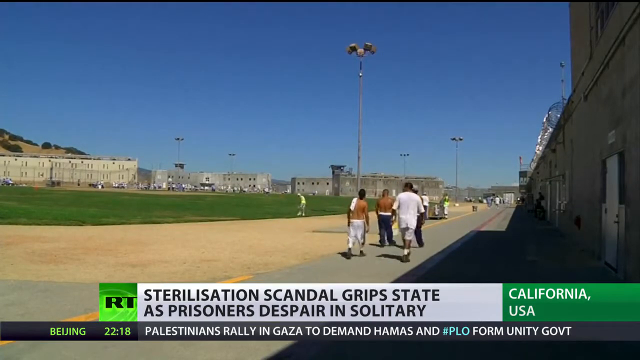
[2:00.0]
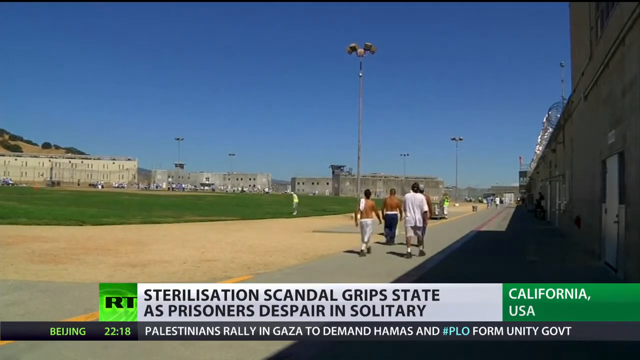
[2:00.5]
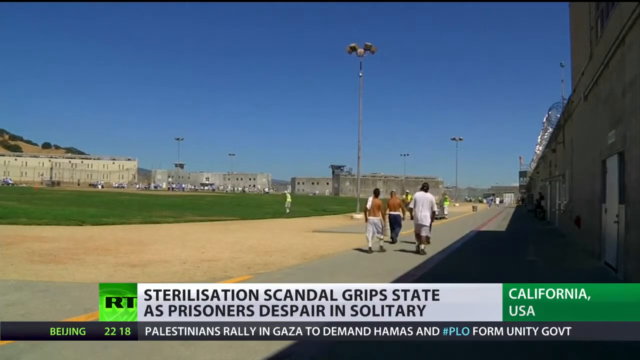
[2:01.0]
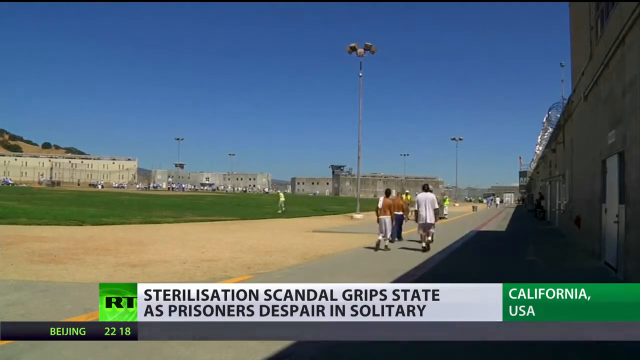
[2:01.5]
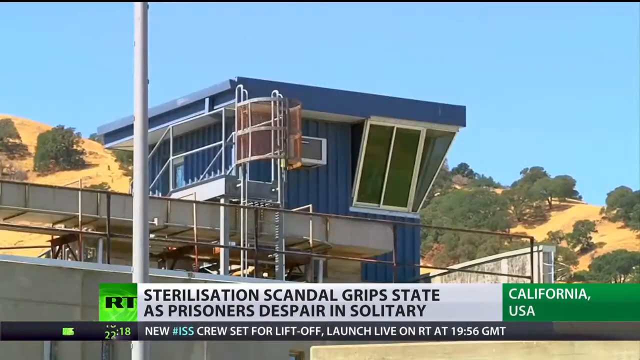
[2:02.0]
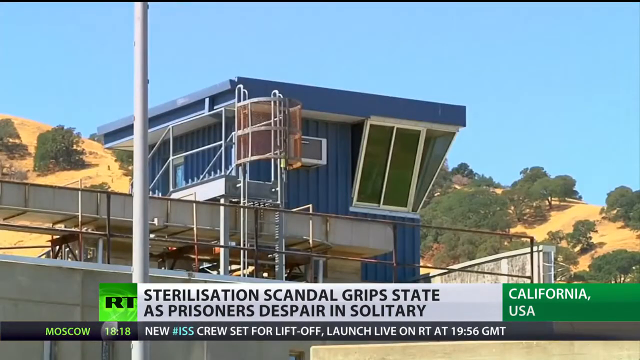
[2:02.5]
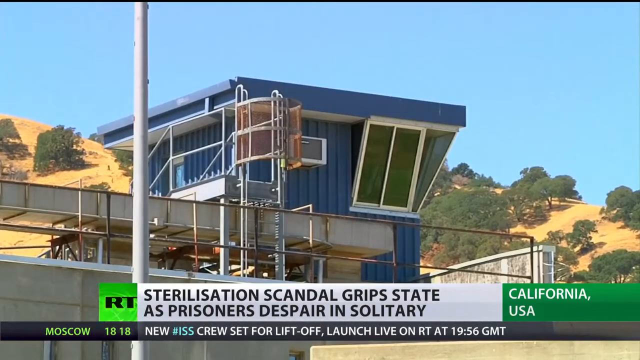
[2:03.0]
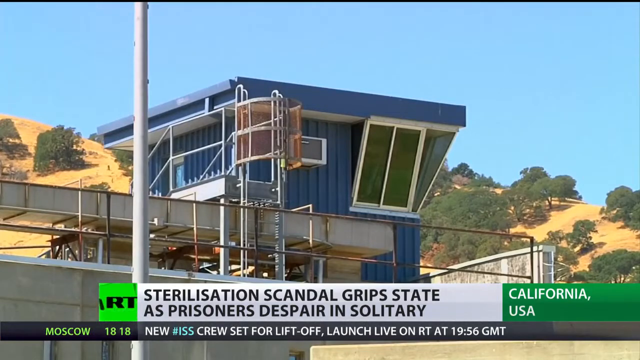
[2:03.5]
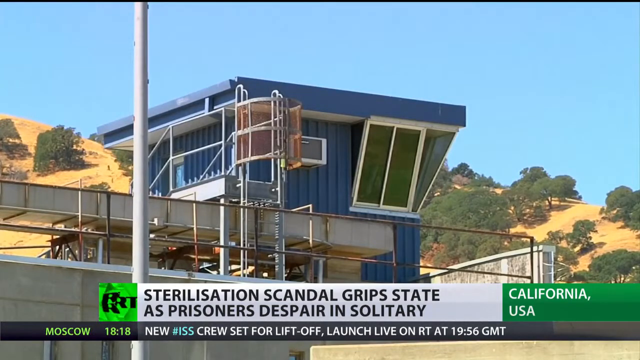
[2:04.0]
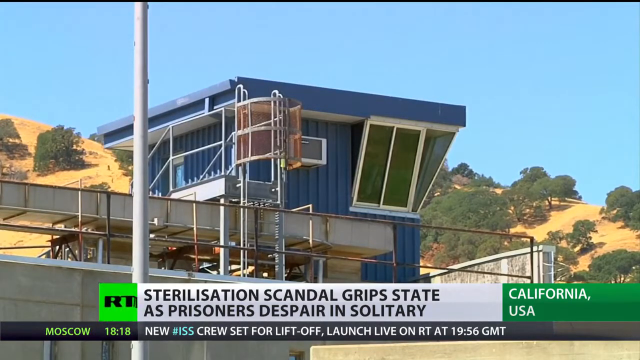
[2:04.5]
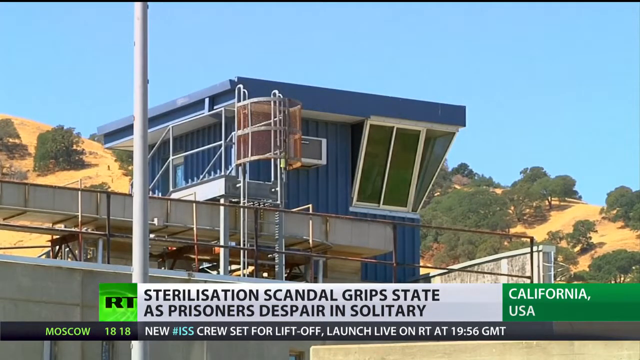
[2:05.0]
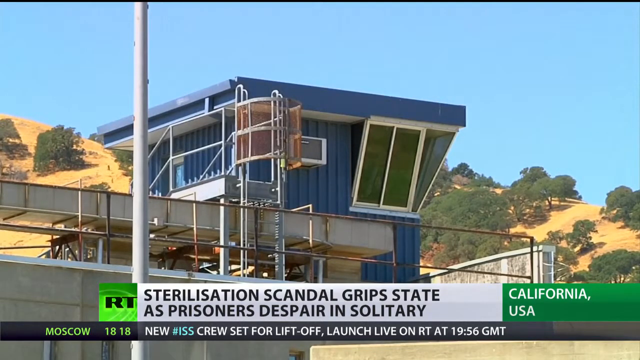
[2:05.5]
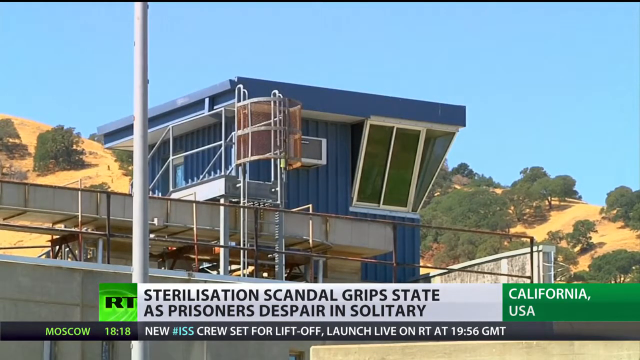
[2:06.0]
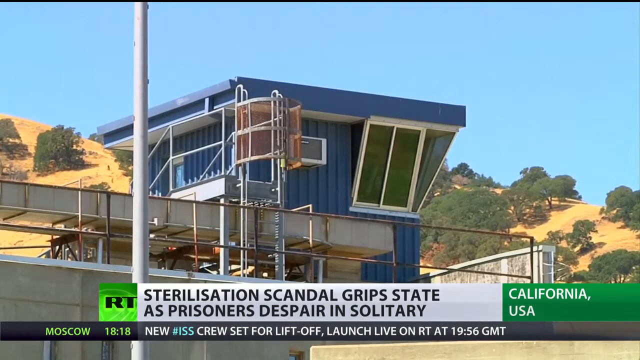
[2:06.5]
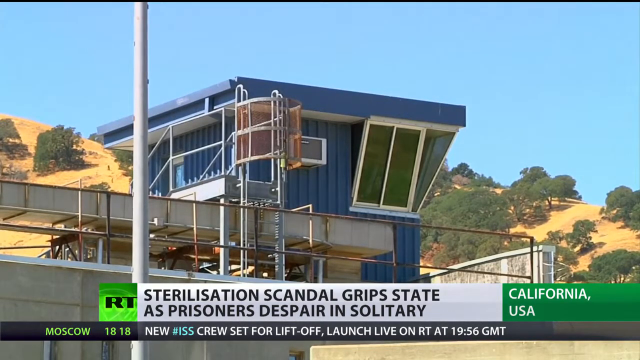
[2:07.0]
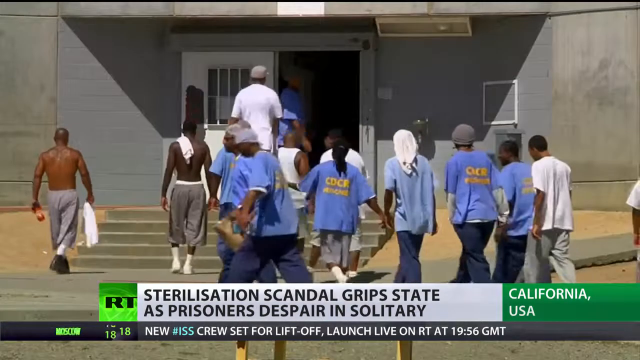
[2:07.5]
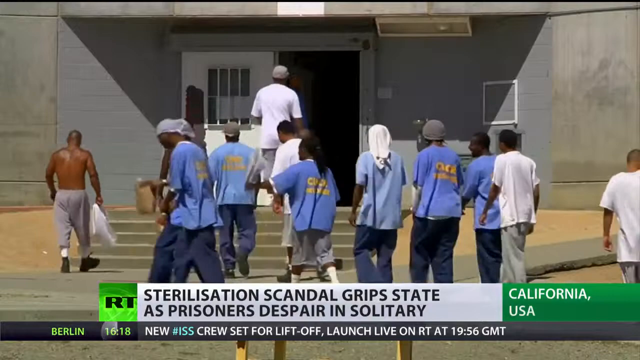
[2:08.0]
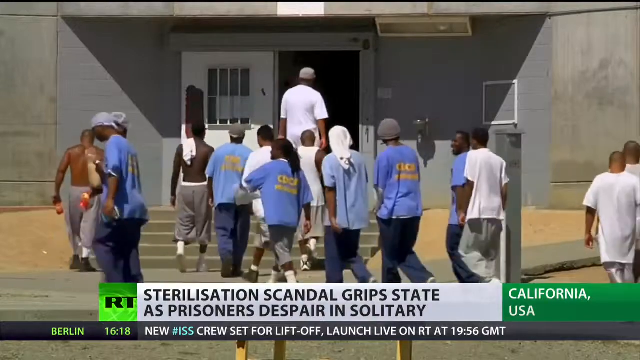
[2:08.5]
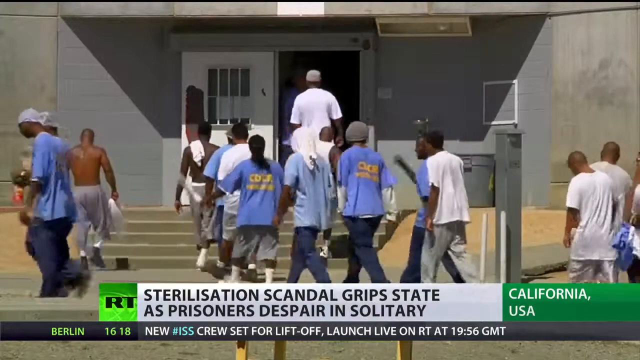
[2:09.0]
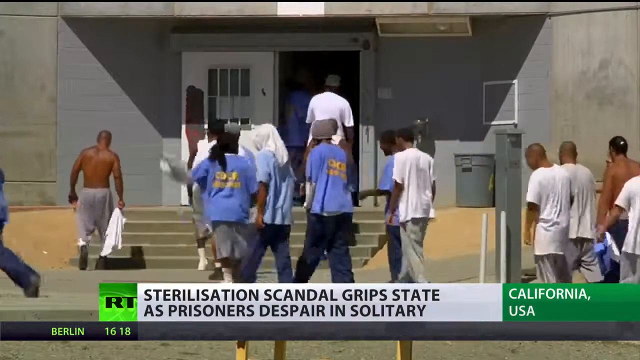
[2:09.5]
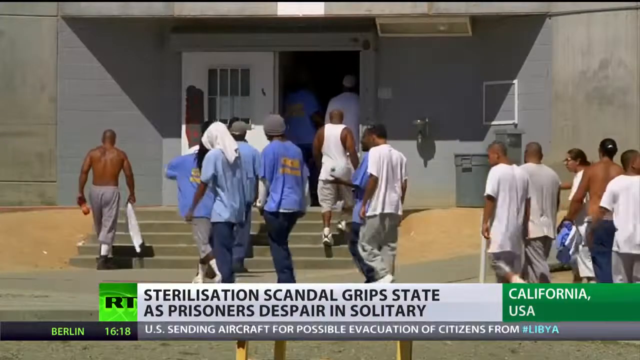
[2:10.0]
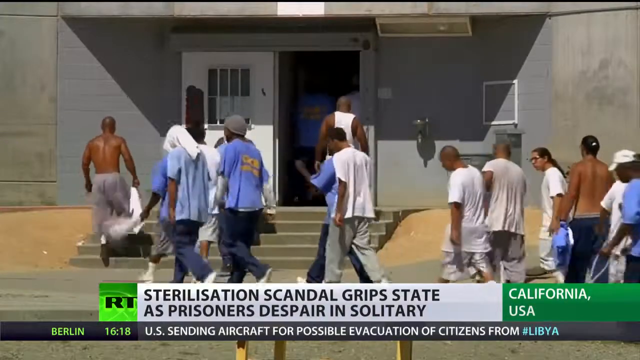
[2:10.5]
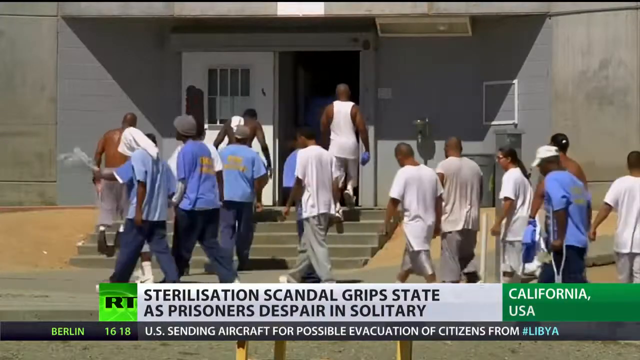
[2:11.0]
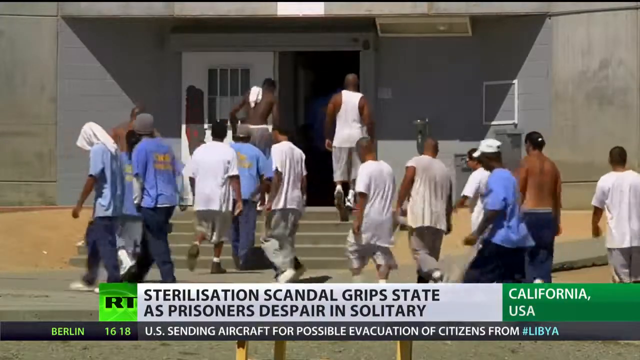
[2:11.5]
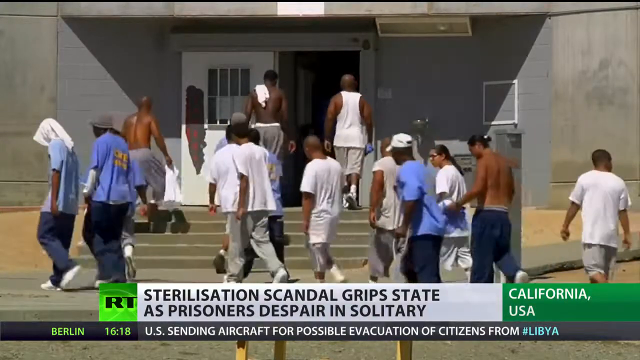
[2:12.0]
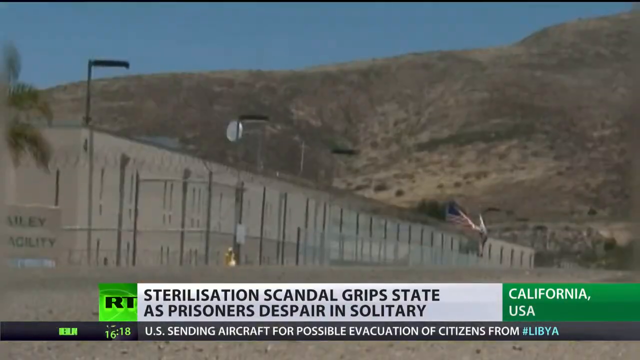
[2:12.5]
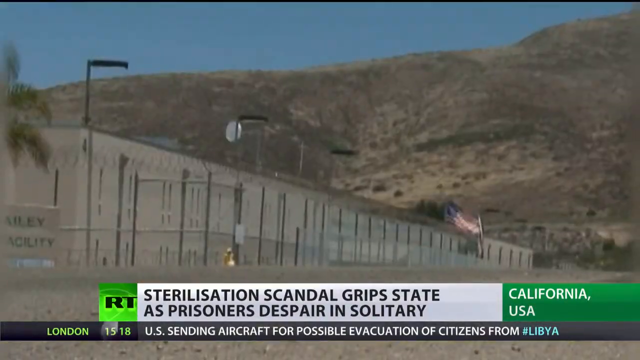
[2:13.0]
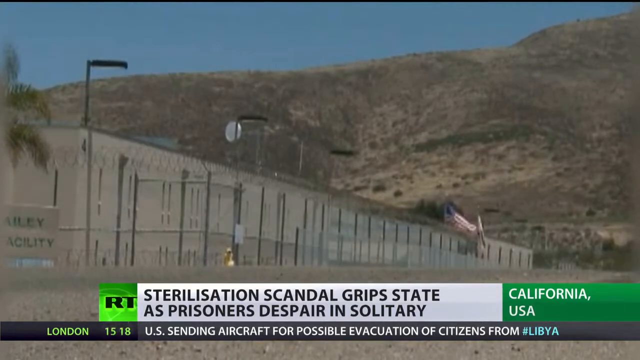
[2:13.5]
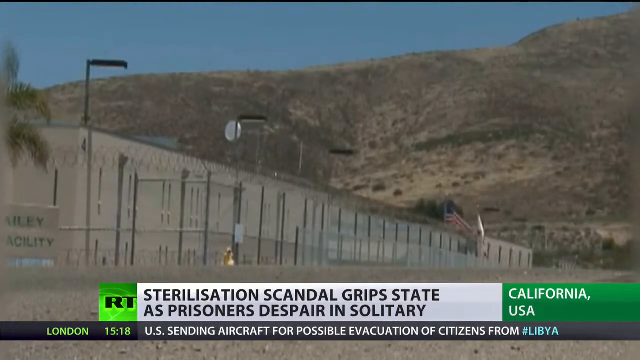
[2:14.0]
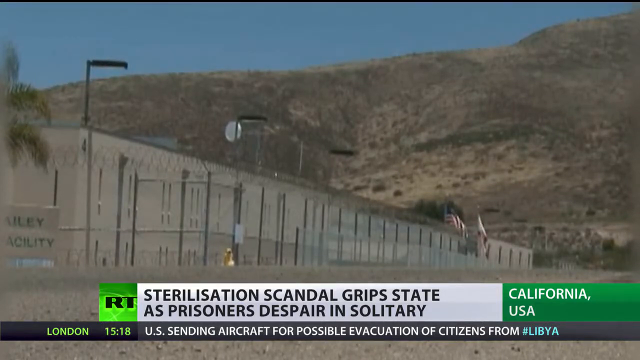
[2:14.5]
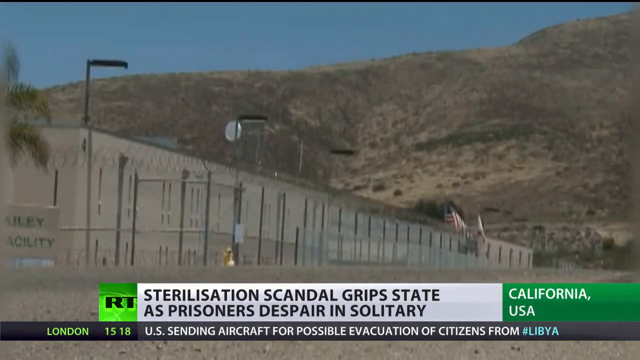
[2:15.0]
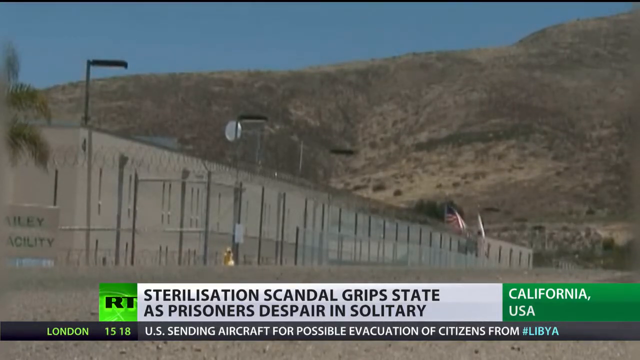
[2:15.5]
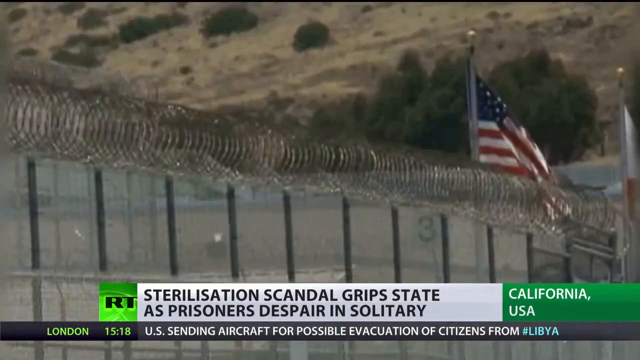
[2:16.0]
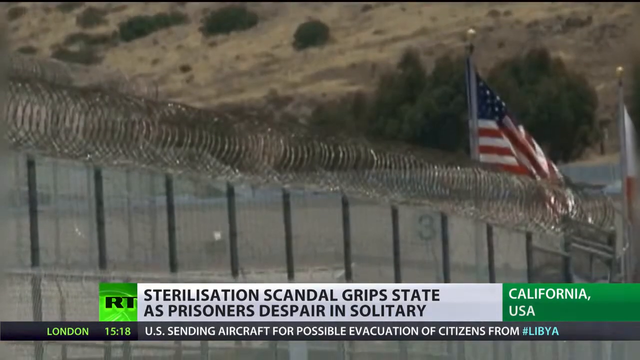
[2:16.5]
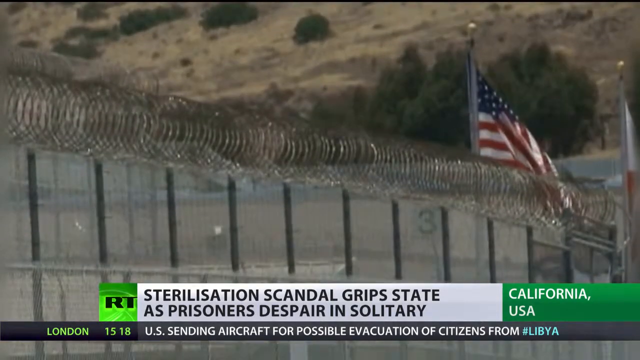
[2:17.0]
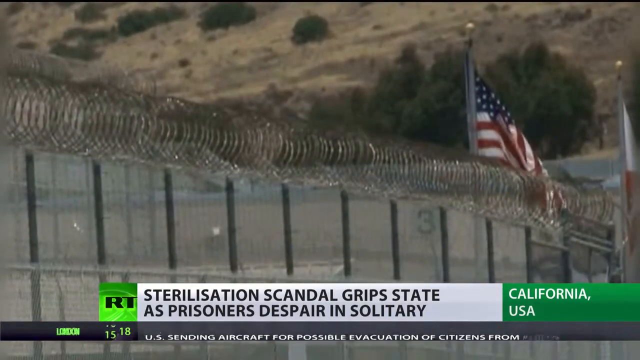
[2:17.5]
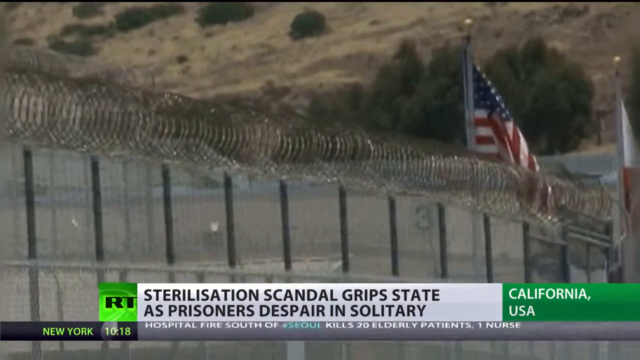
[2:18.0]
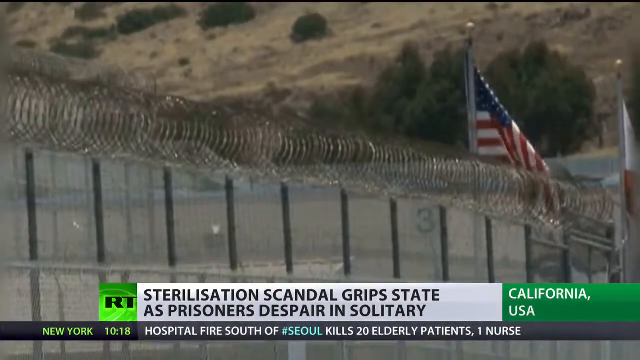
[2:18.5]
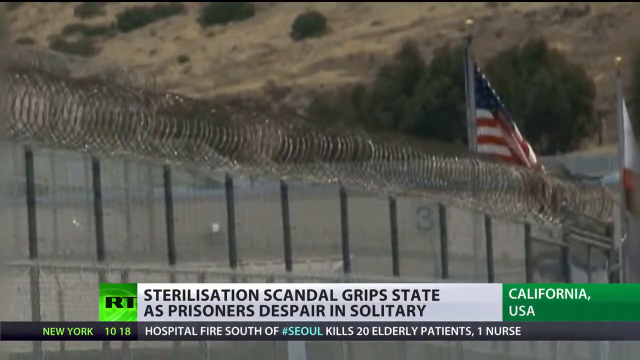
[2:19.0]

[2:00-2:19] What looks like a blue guard tower in the prison, not as tall as the others, has ventilation, pipes and a ladder up to it. Hills that look like California hills are in the background with some trees and orange-looking dirt. The title "sterilization scandal grips state as prisoners despair in solitary" is at the bottom. Prisoners walk back into the building from the yard; some wear blue shirts, some white shirts, and some no shirts. Another scene shows the outside of the prison in contrast to the hills behind it, followed by a shot of the barbed wire with an American flag by it. The view returns to the blue guard tower in the same static, unmoving shot.